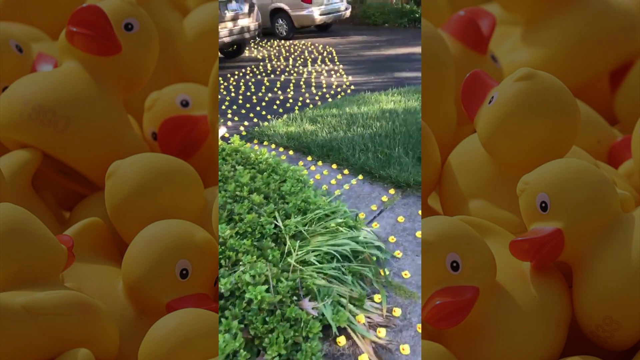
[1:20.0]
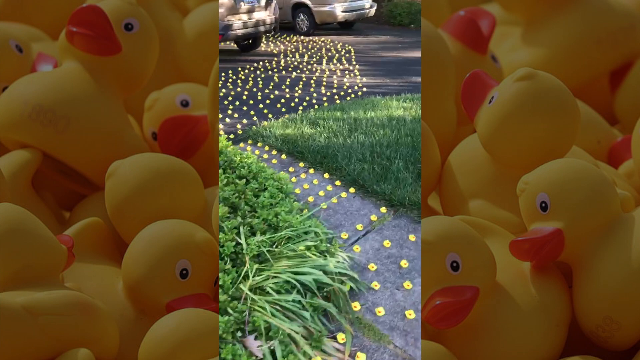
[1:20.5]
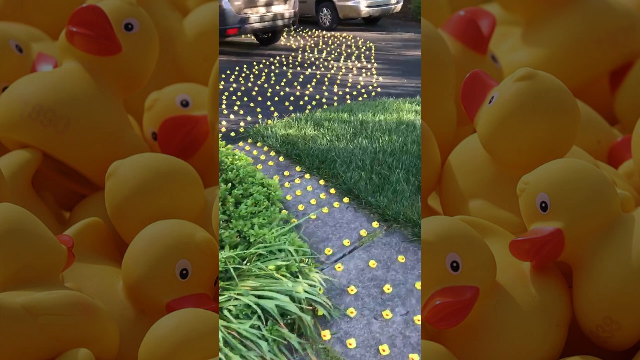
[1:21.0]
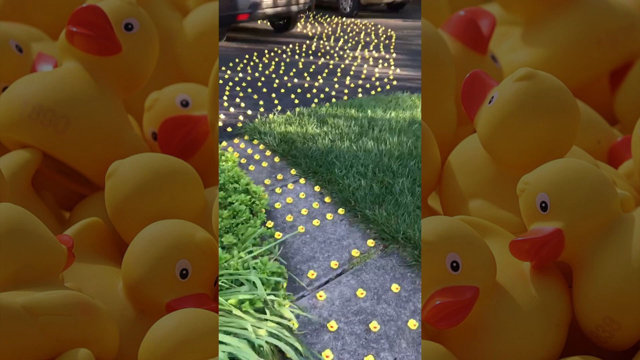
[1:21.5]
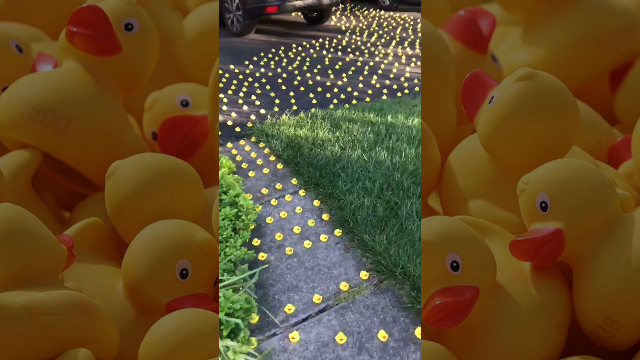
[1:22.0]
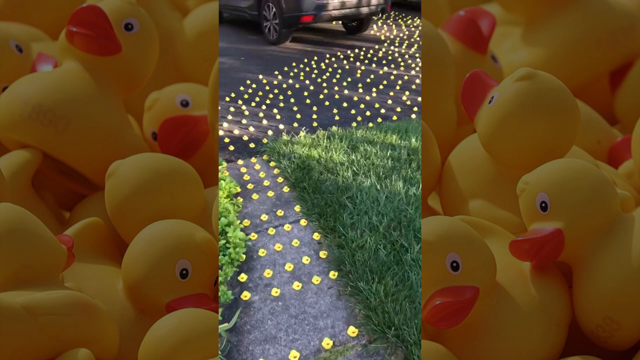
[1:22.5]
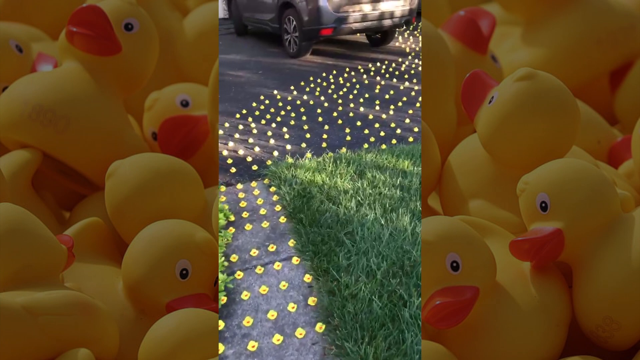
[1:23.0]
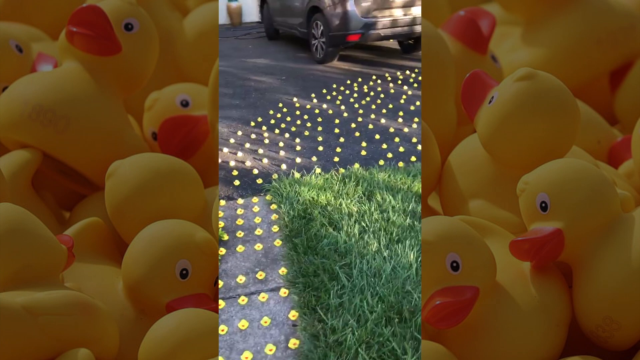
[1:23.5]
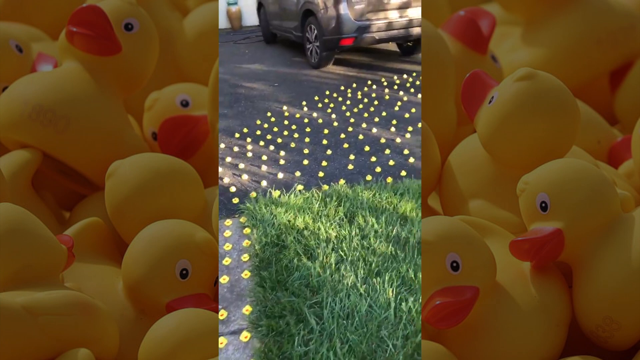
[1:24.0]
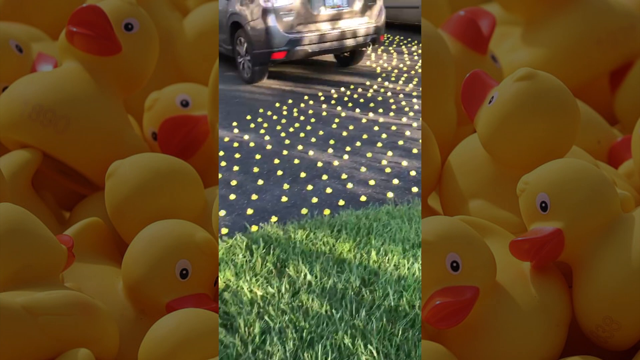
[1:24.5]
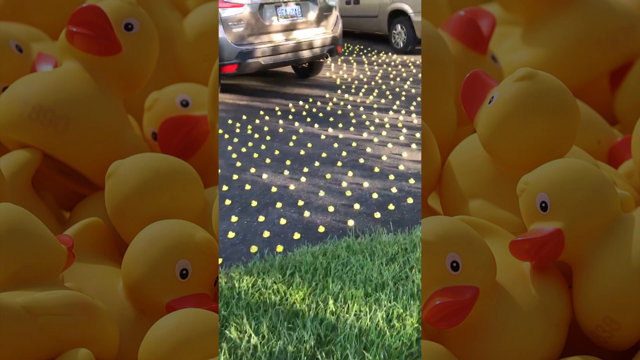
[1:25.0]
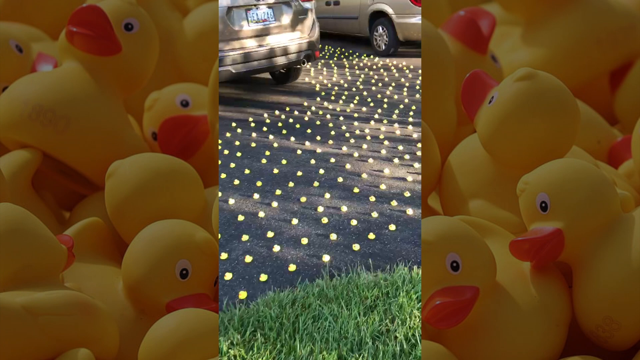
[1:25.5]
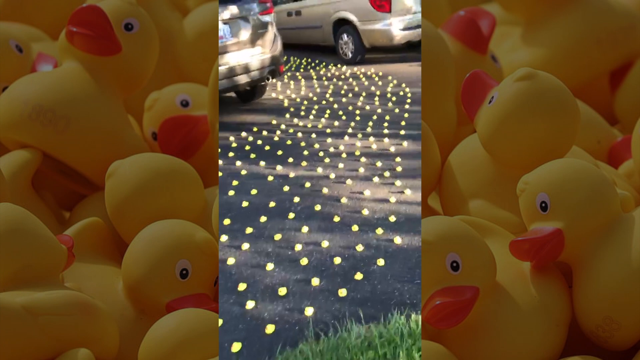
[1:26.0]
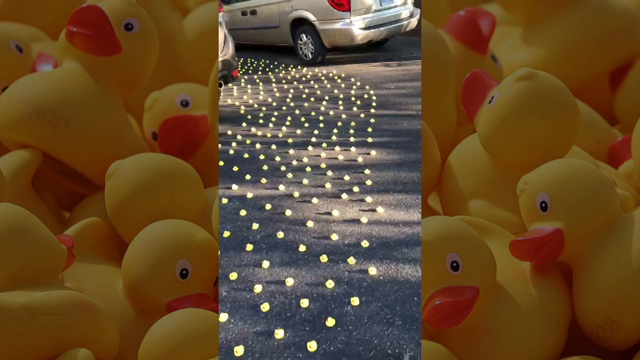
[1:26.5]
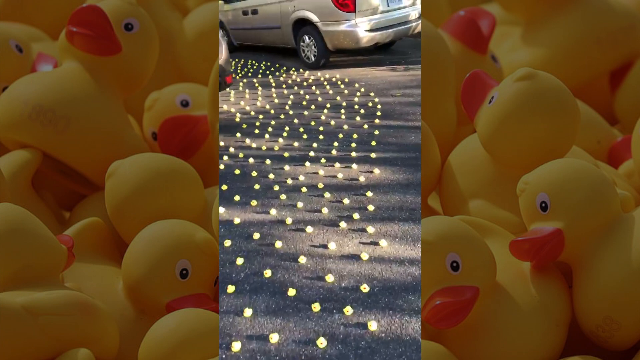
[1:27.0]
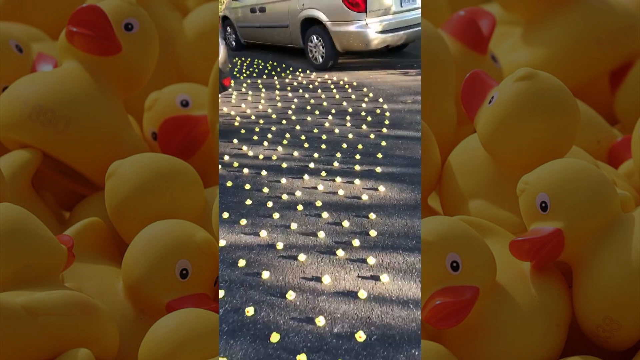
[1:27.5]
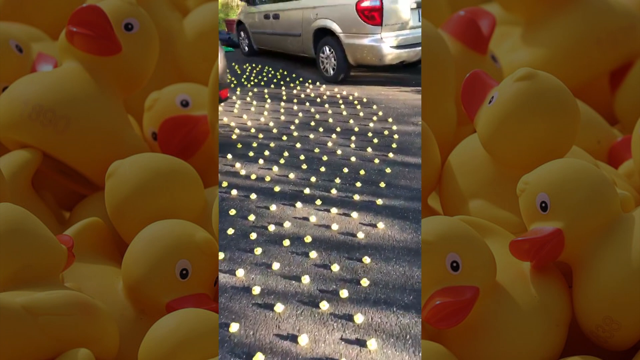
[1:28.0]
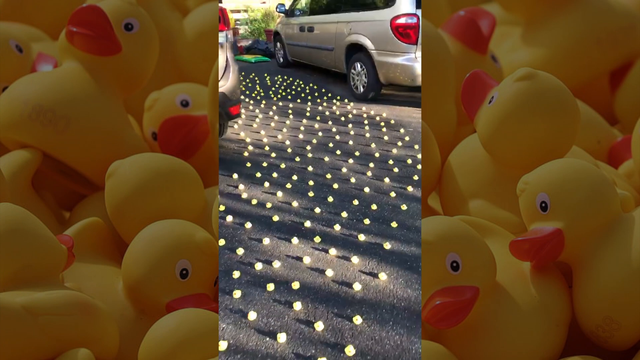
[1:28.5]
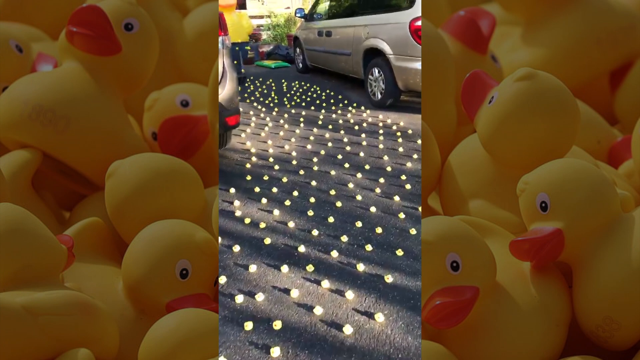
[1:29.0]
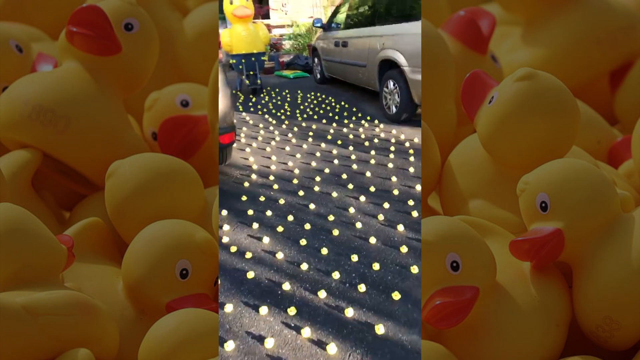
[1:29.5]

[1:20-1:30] The person continues walking toward the driveway, where the two cars are visible, though only their lower half rather than the full cars. One of the cars seems to be an SUV. The person follows the trail of rubber duckies, which goes in between the two cars. Between the cars, the line of rubber duckies ends with a giant yellow rubber ducky standing in front of all the small rubber duckies, apparently the queen. Behind it is a sort of fence.